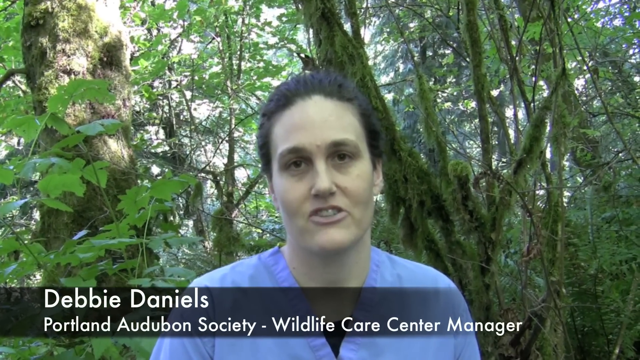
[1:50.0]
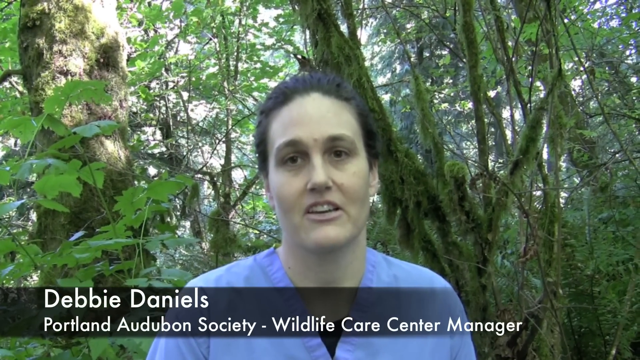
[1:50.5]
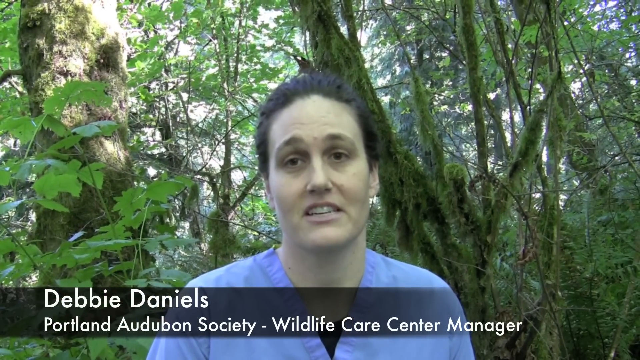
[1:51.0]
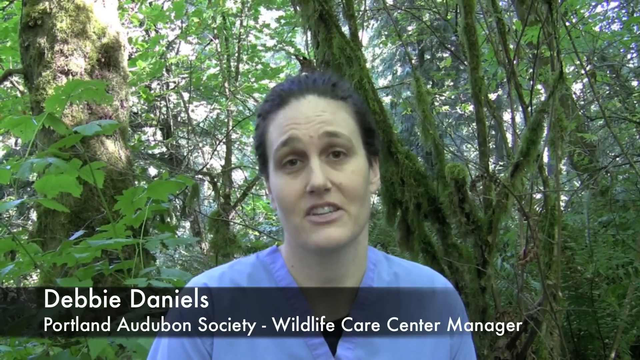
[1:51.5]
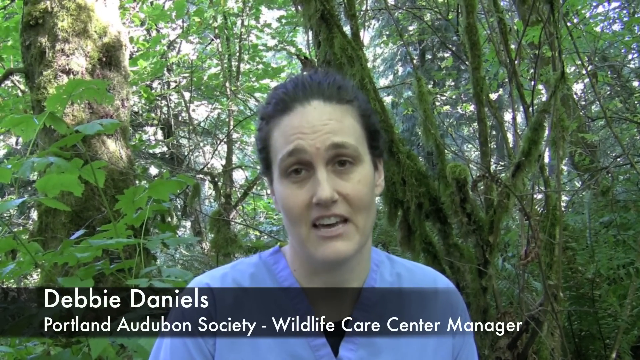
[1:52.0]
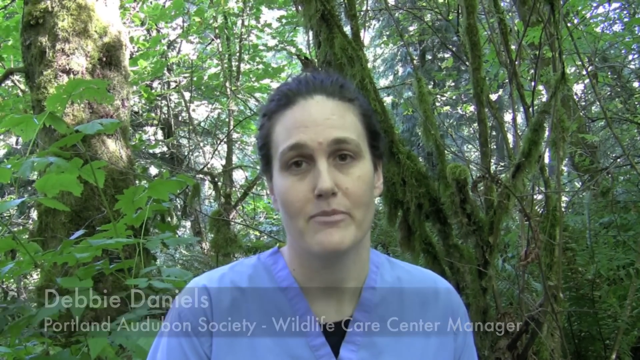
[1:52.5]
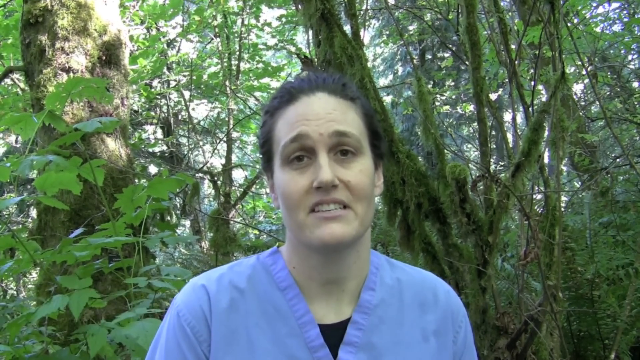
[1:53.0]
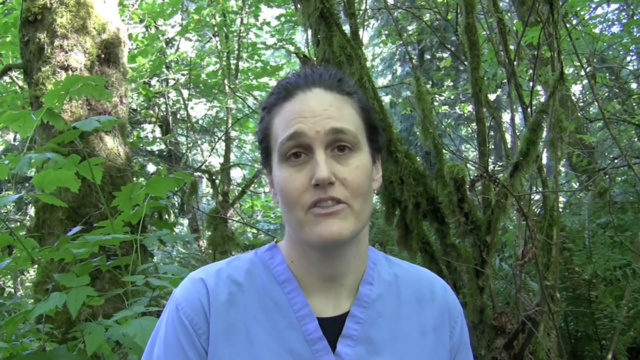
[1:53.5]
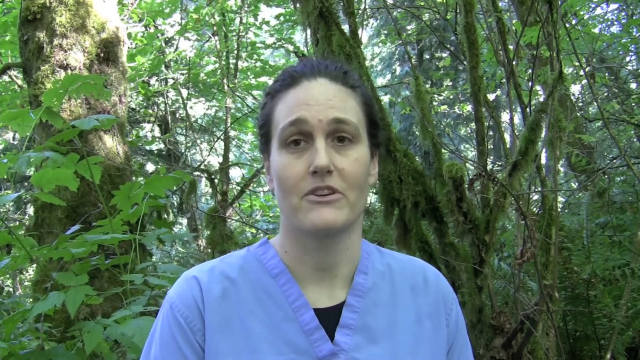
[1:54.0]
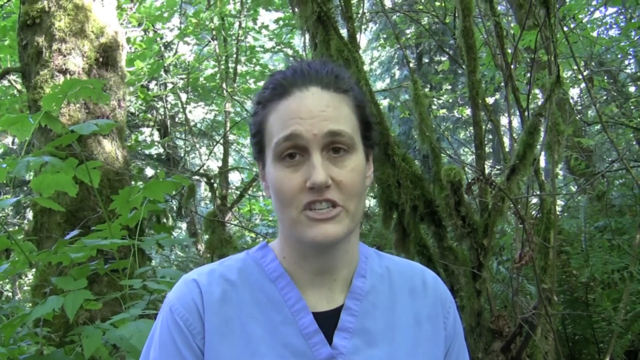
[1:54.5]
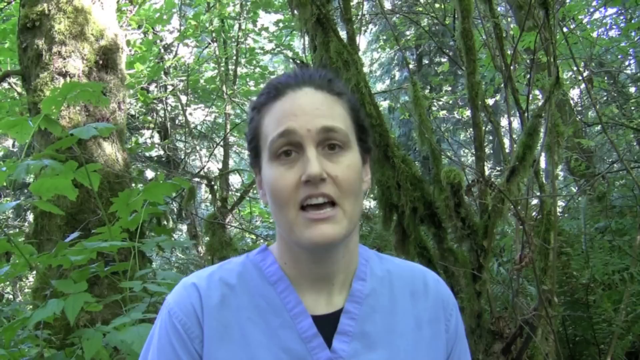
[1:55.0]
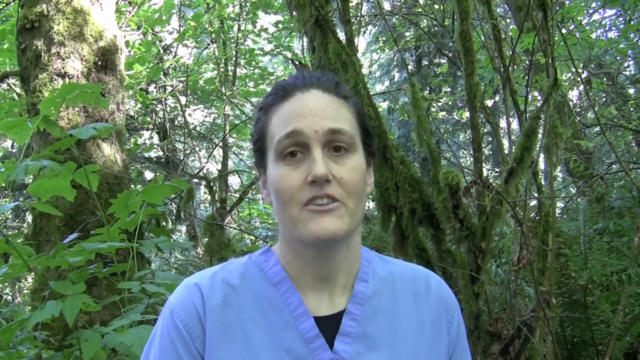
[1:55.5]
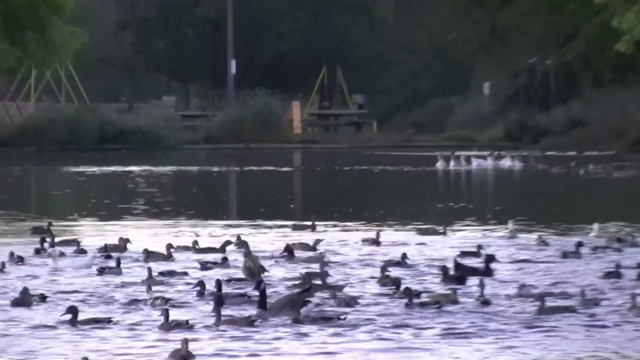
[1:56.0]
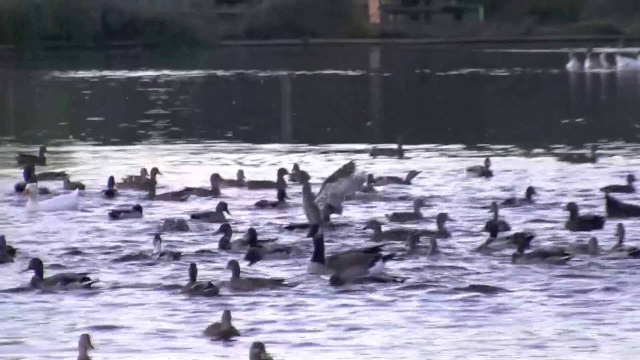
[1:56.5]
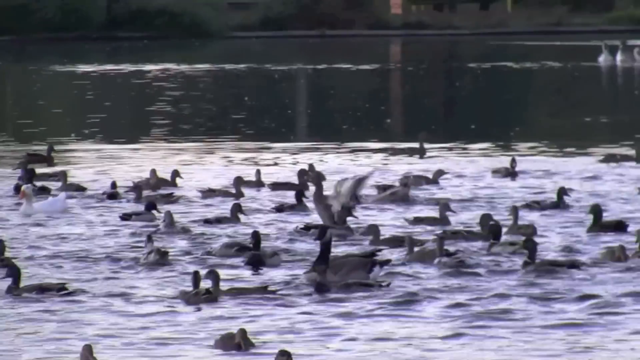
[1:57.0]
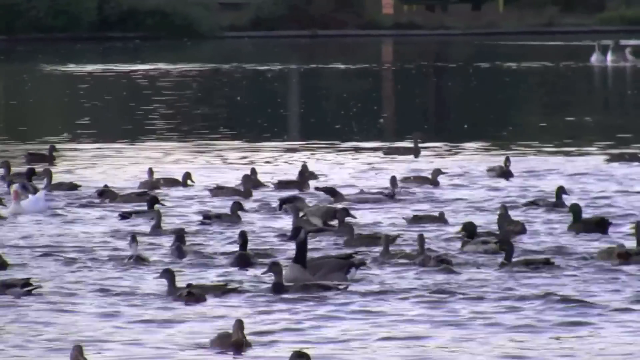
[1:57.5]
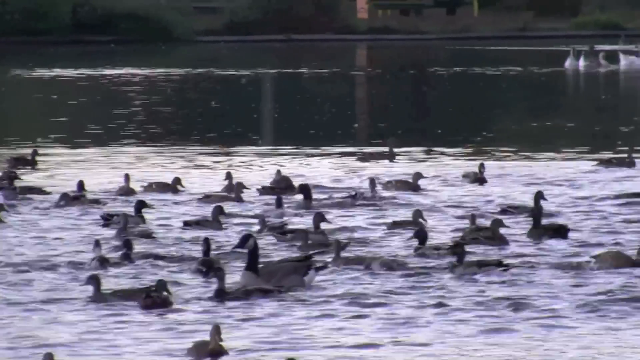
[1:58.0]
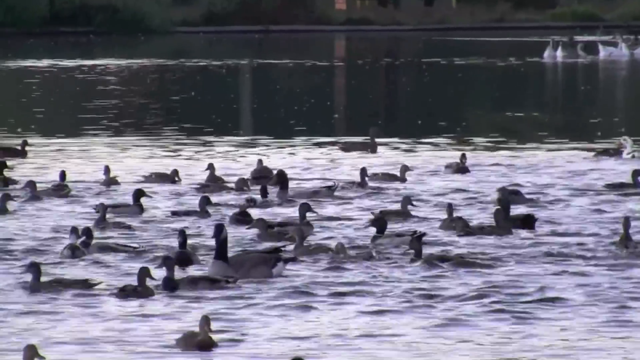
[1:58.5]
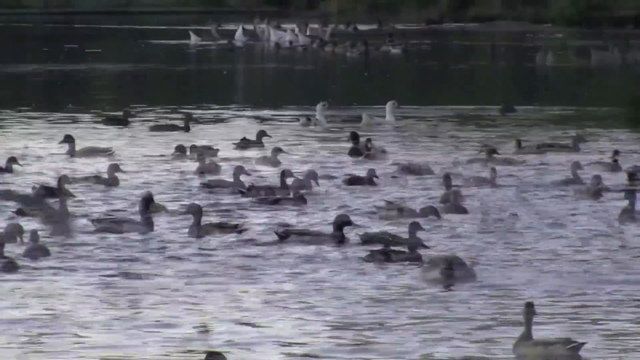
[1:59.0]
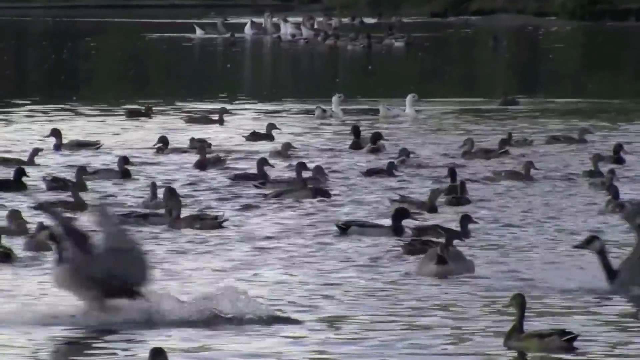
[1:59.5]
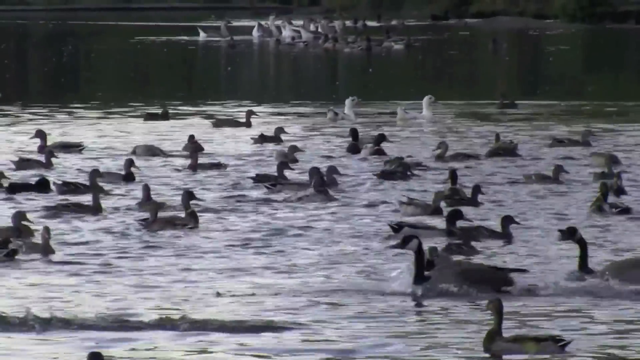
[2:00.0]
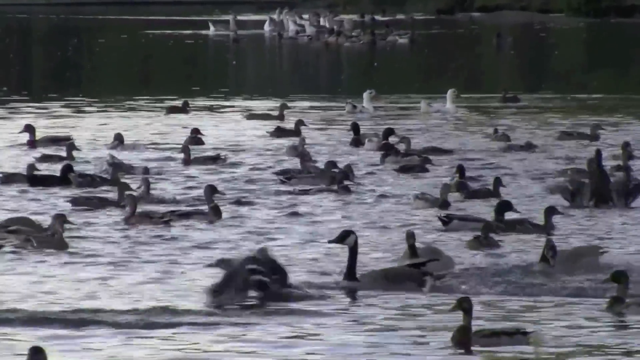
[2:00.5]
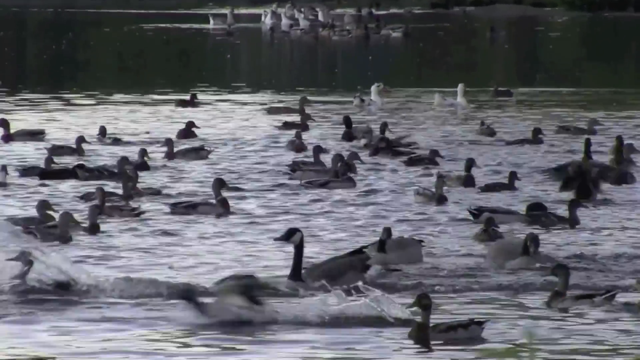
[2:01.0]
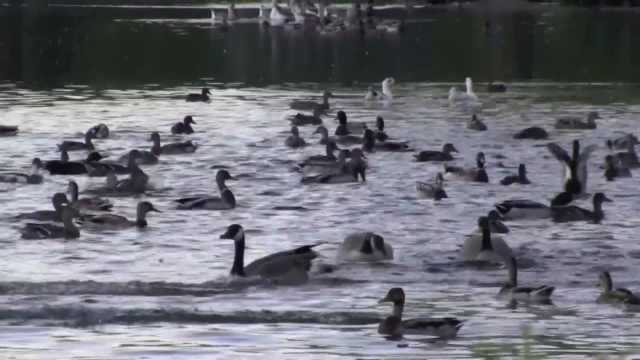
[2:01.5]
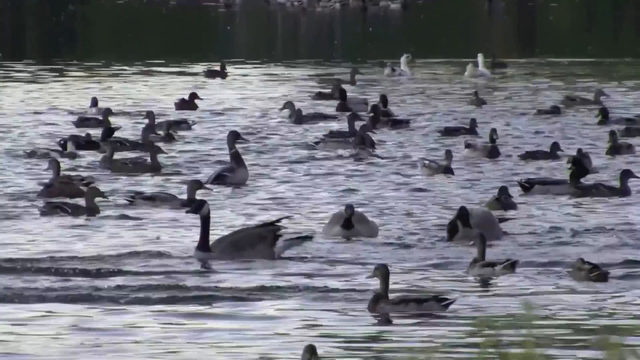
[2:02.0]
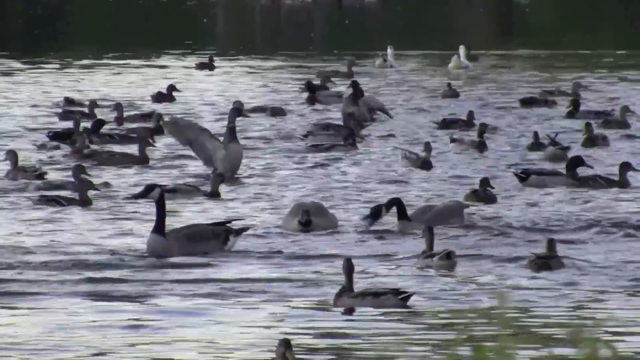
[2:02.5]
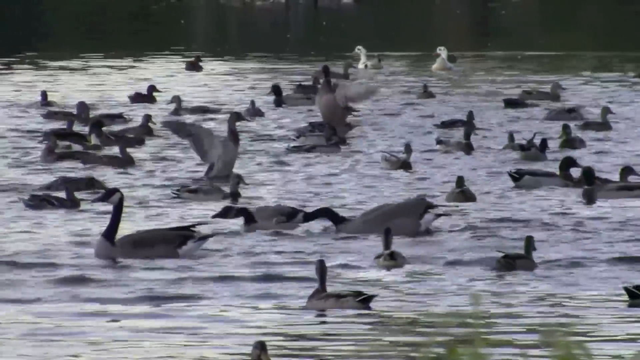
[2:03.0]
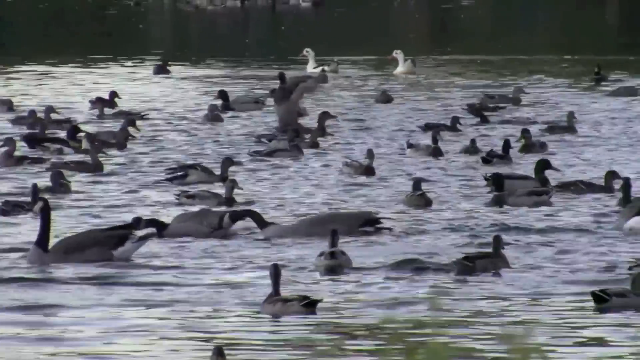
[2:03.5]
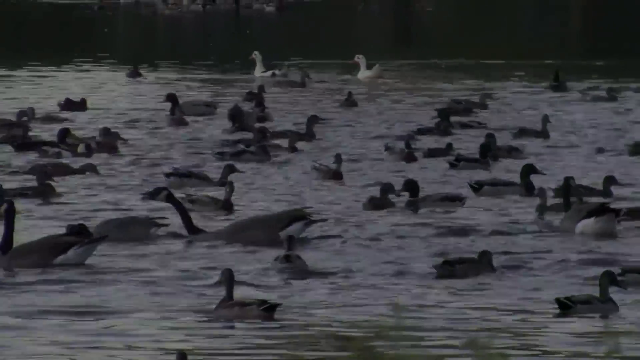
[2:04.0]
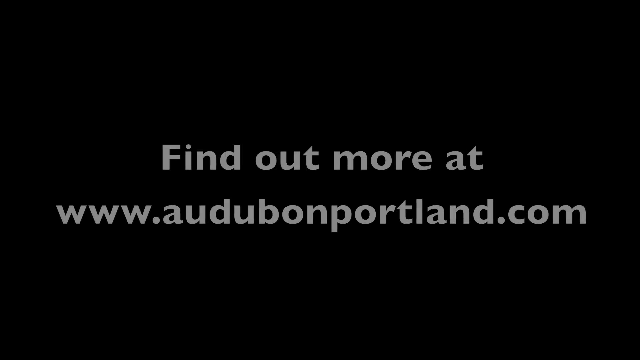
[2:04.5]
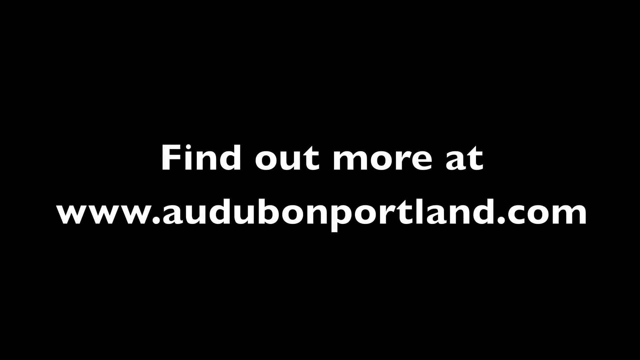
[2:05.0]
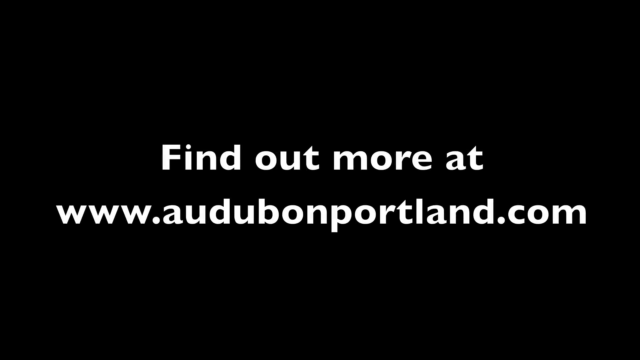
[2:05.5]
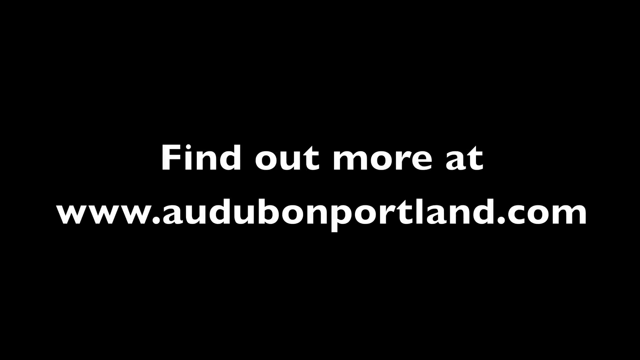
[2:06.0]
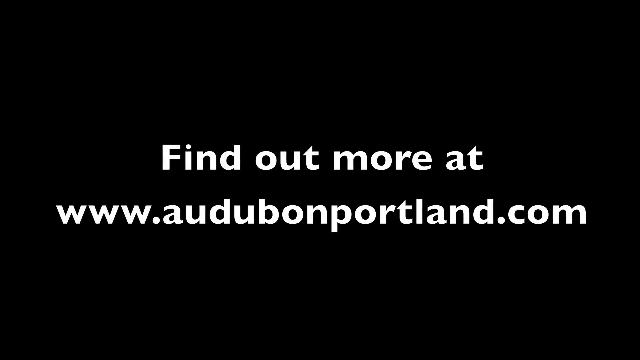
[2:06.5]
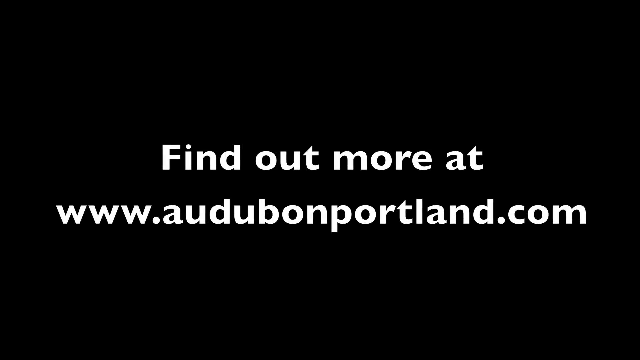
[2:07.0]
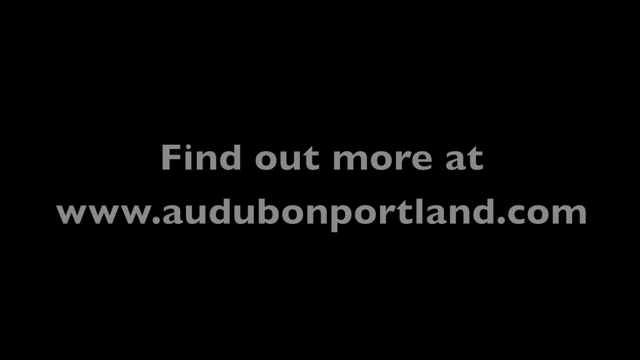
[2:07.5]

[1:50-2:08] An interview shows a white woman with short black hair and dark eyes who appears to be in her early 30s, wearing an earring in her left ear and a blue shirt over a black undershirt. She is identified as Debbie Daniels, Portland Audubon Society Wildlife Care Center Manager. Behind her is a wooded area with many trees of various shapes and sizes, leaves and large trunks, with moss growing on a small tree directly behind her. The camera stays on Debbie as she speaks intently to the camera. The video cuts to a pond with approximately 30 ducks in a circular area, and another circle of ducks and geese, with approximately 20 ducks standing up and flapping their wings. The video ends on a black screen with white lettering that reads "find out more at www.audubonportland.com".